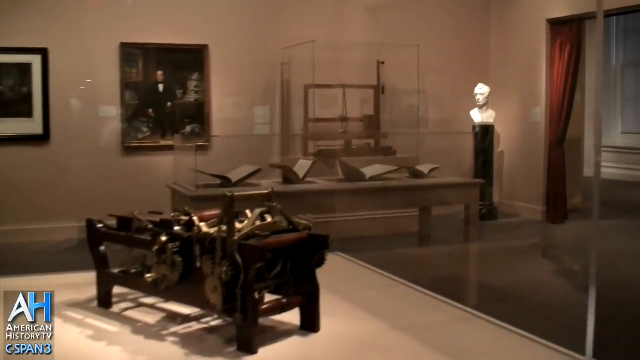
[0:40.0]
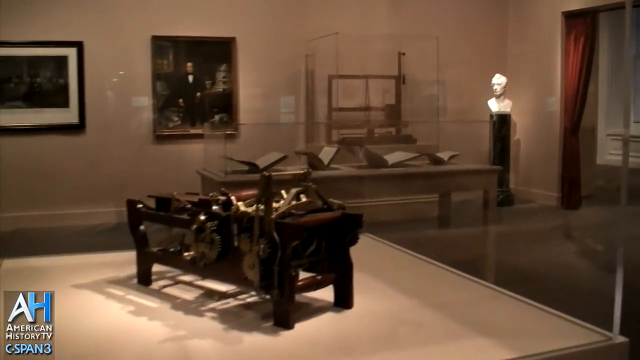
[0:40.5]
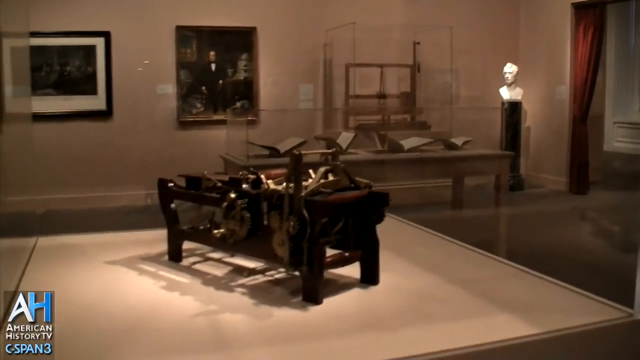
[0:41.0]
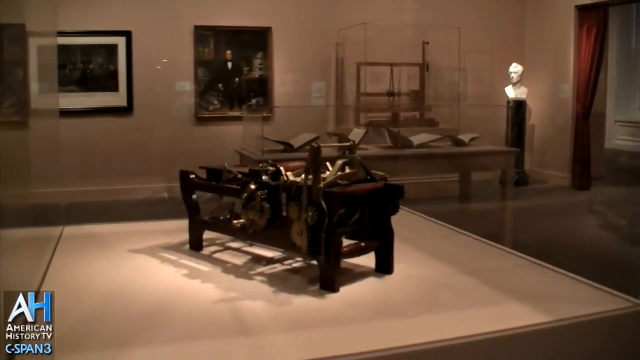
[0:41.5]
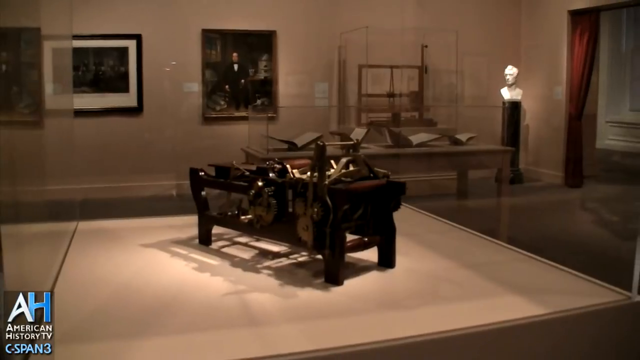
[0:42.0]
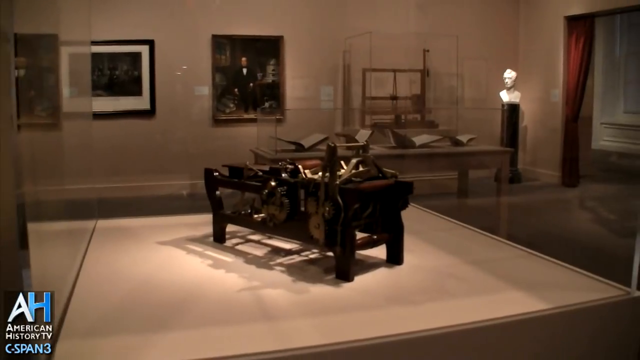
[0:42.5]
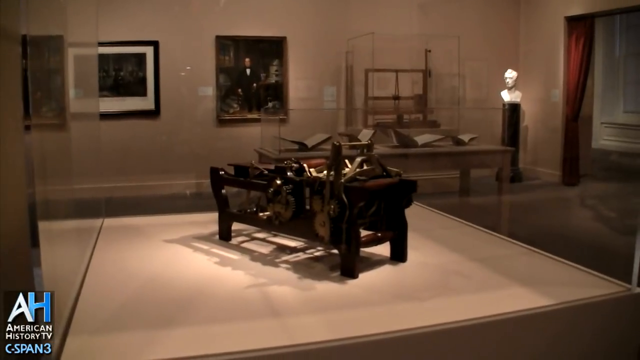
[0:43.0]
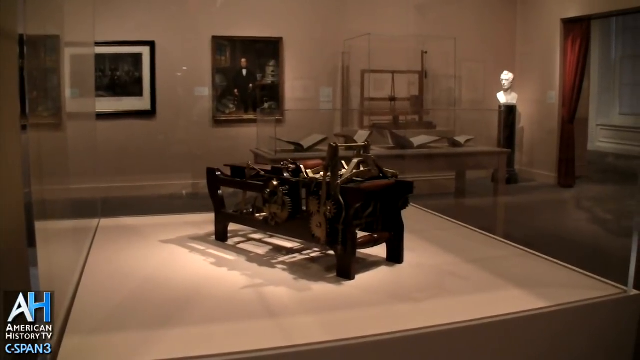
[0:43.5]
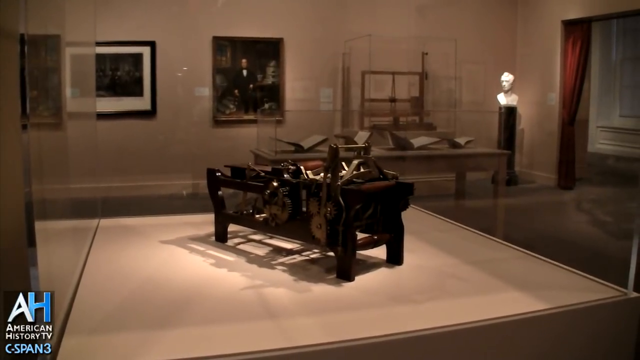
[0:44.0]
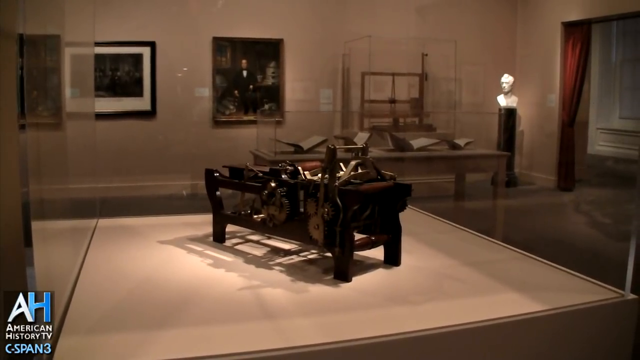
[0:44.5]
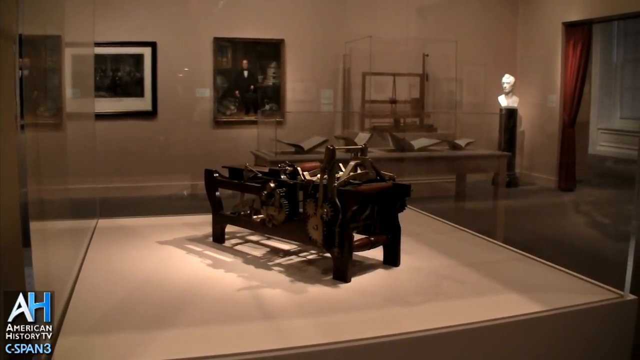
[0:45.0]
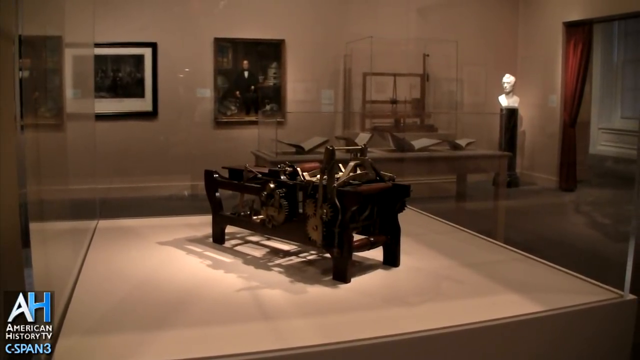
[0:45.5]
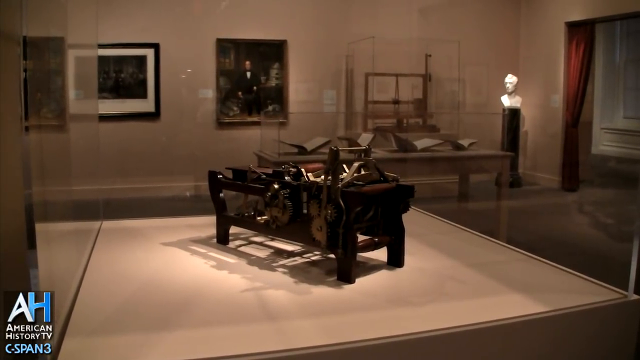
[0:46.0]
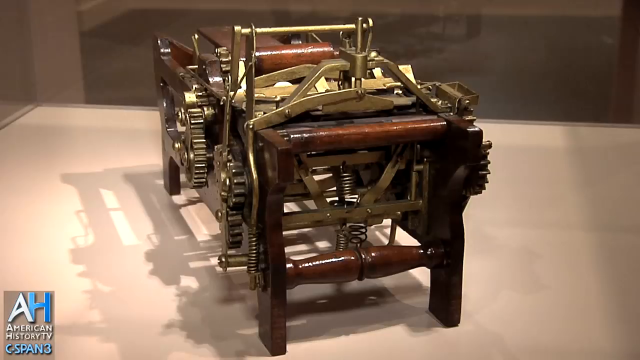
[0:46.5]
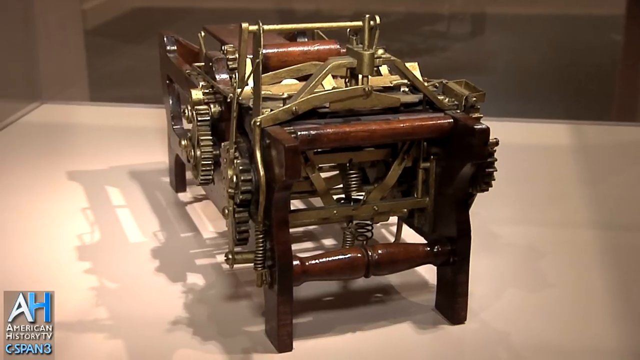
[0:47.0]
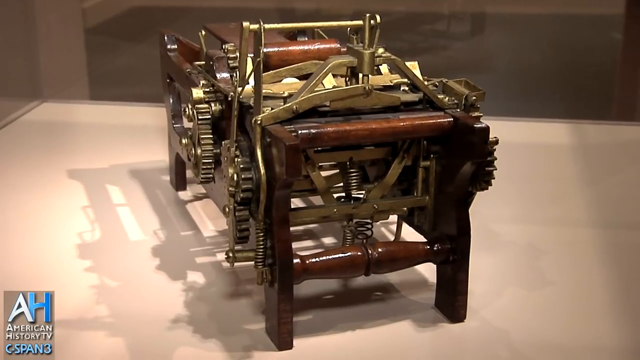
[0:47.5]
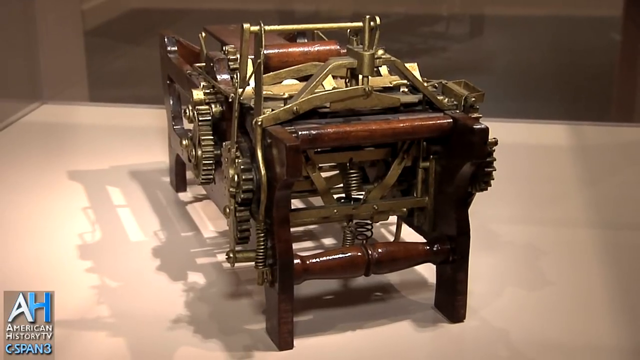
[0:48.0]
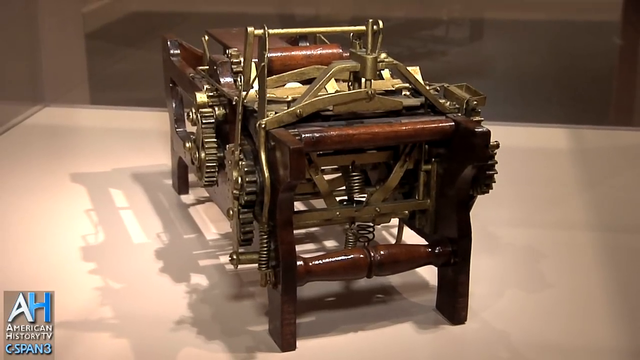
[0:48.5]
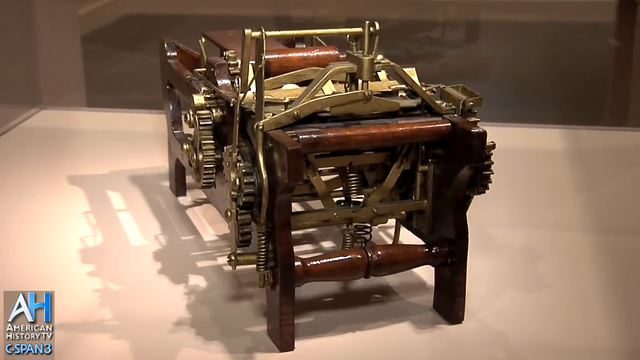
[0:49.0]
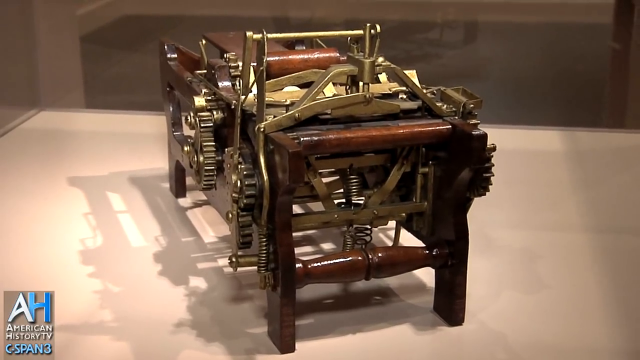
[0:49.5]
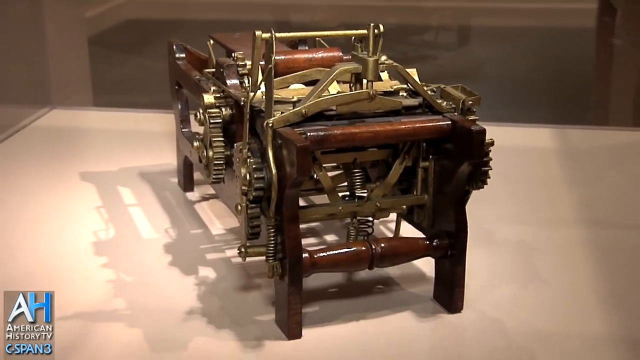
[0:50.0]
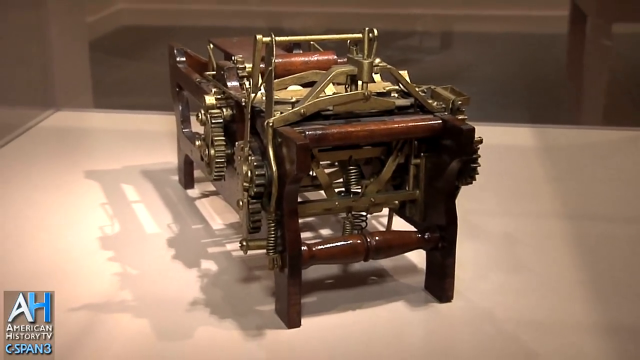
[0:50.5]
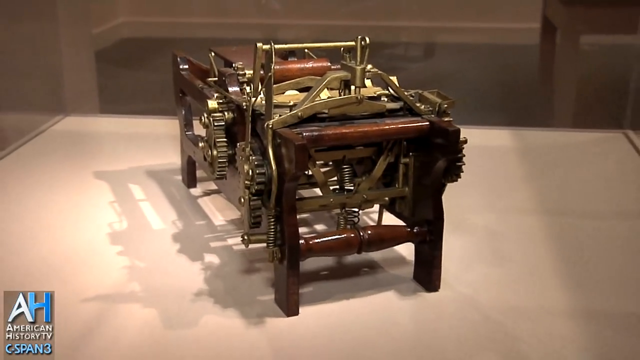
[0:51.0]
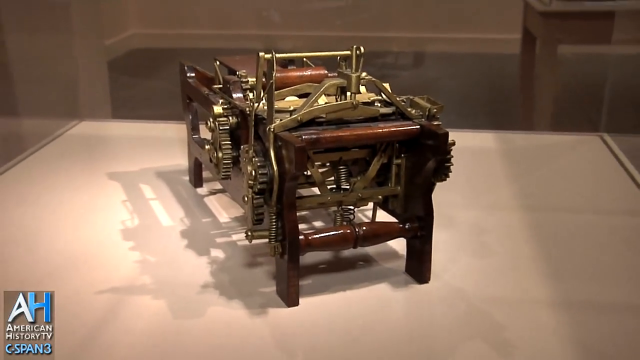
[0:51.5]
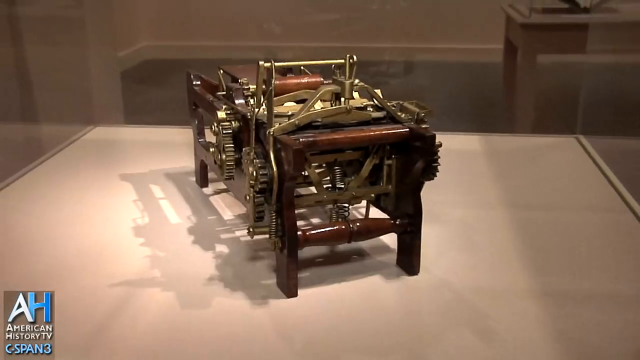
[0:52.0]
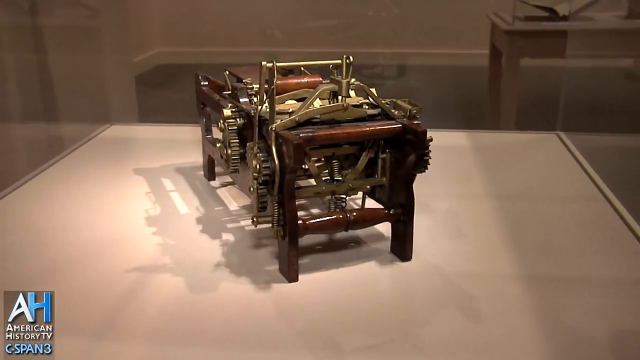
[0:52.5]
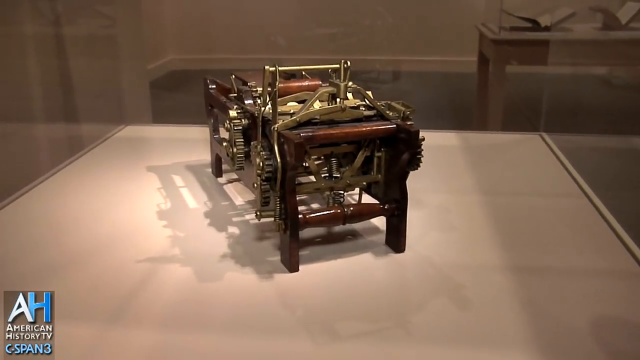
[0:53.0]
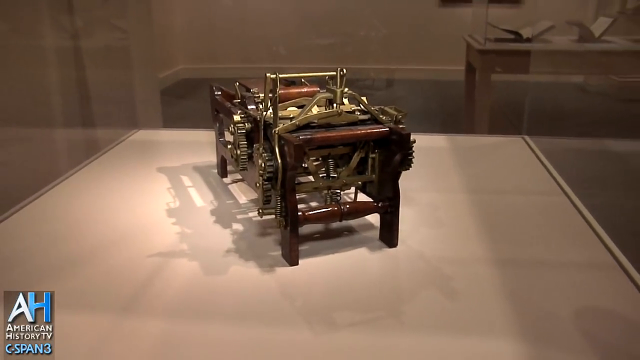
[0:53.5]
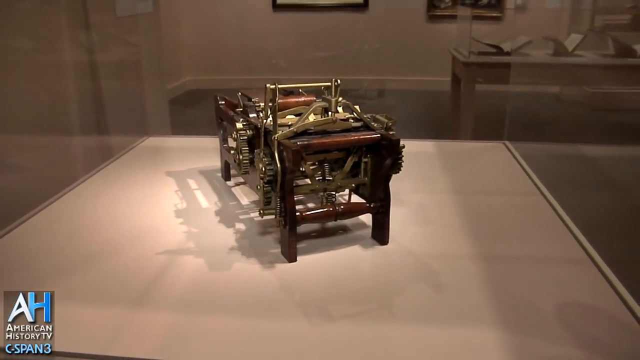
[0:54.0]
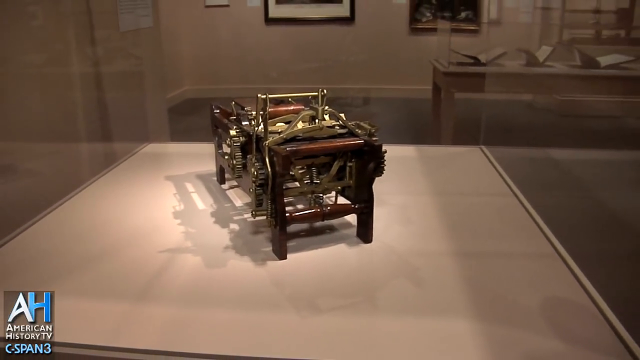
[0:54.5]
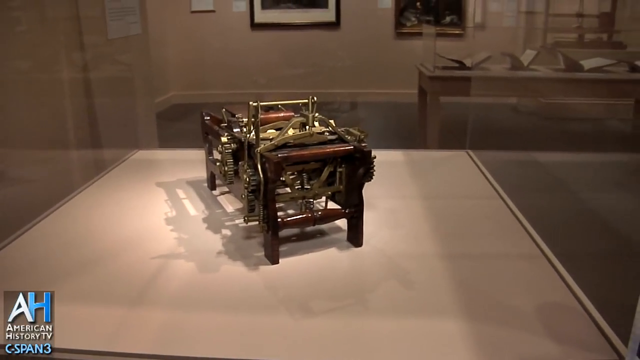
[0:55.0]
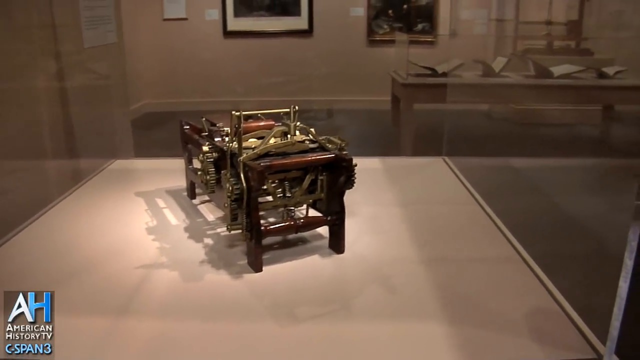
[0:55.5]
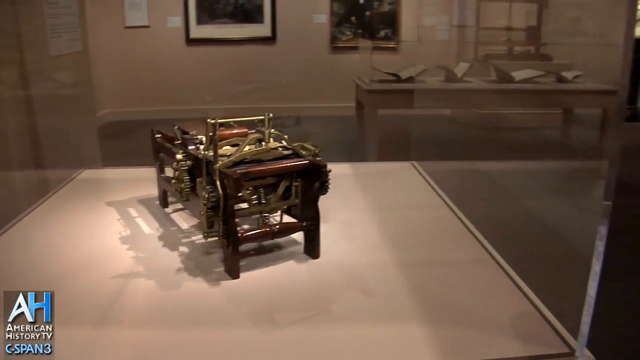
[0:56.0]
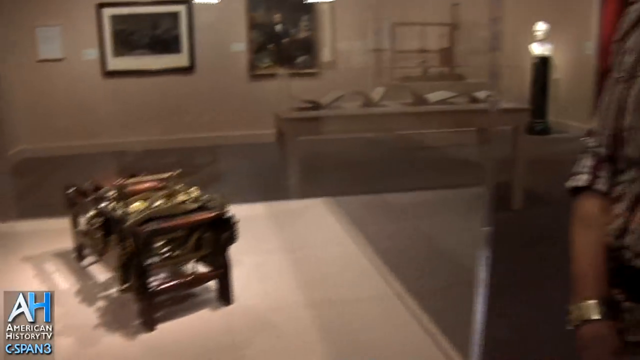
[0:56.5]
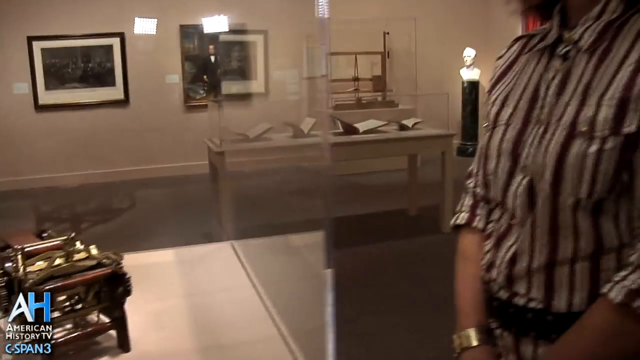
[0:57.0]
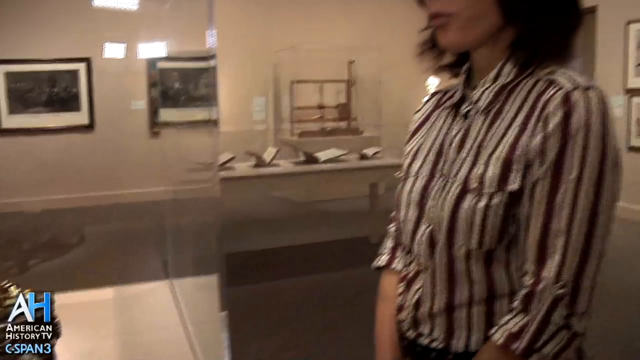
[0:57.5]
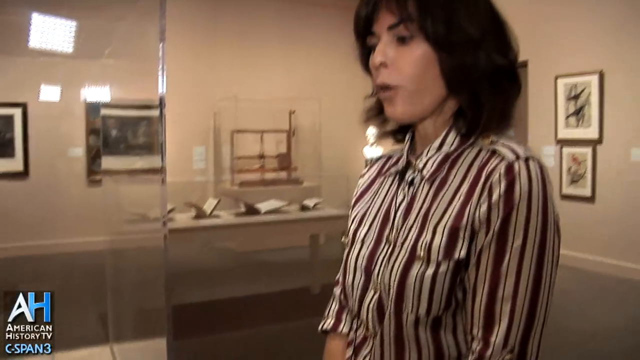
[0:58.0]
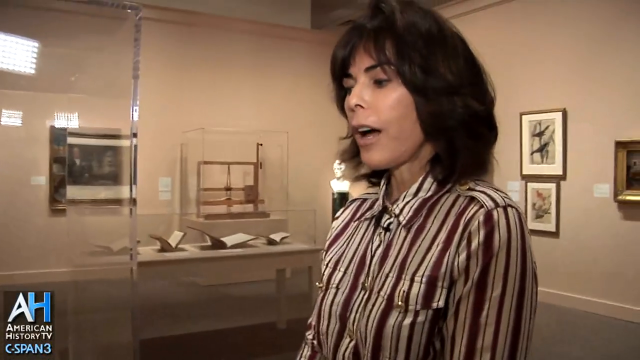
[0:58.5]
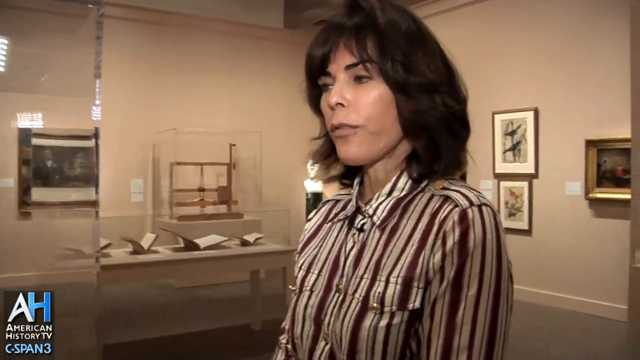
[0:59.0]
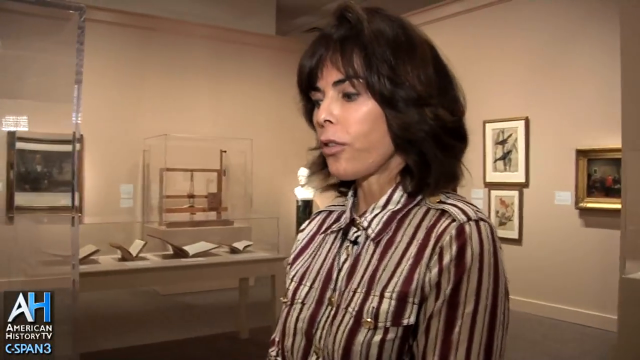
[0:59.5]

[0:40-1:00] The Smithsonian Museum shows many American inventions. One has a wooden frame and lots of cogs, gears and levers to turn; it is about eight inches wide, and its purpose is unclear. A woman describes it on a tour. She has dark, layered 80s-style hair and wears a silk blouse with vertical stripes in white, mauve and maroon. In the corner is a white bust of a man, and in the background is a portrait of a man in a black suit that looks to date from about the 1870s. In front of the portrait is something that looks like some type of press, possibly with a handle at the top or something to pull. A glass case in the middle of the room holds what look like books open at certain pages, though what they are cannot be made out.